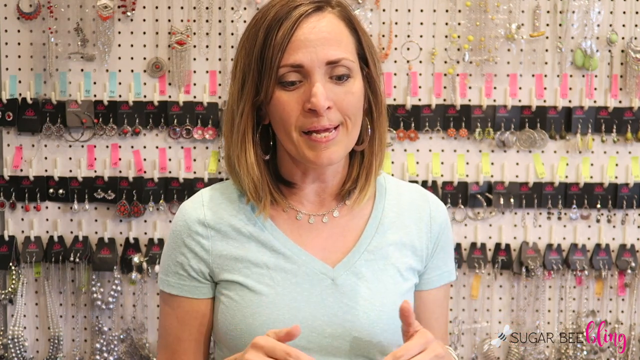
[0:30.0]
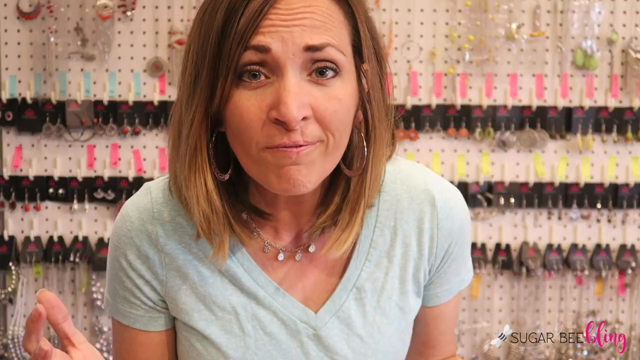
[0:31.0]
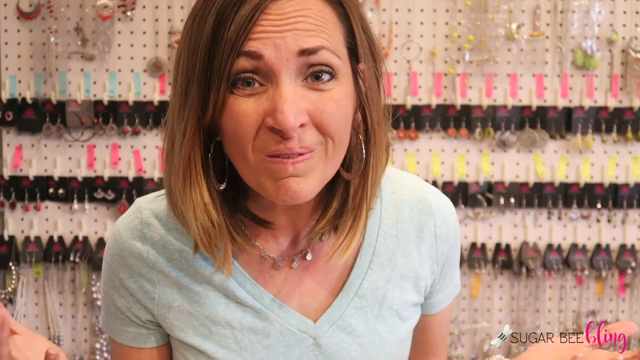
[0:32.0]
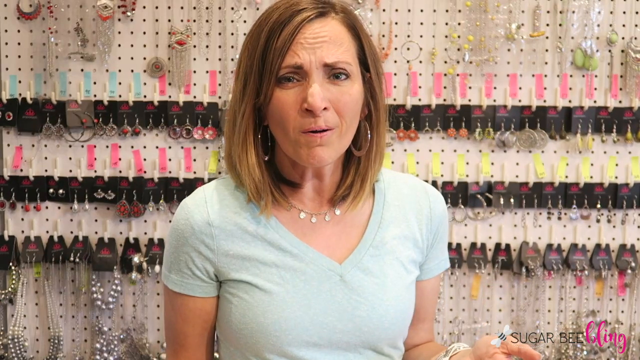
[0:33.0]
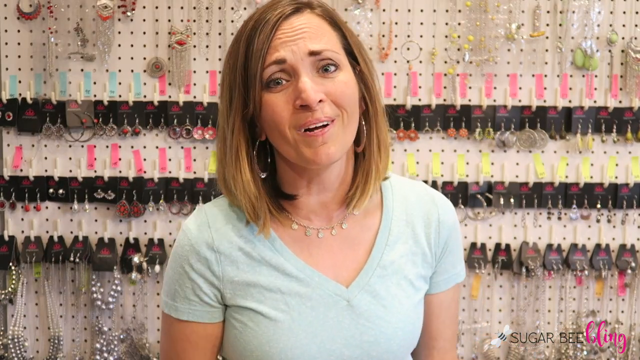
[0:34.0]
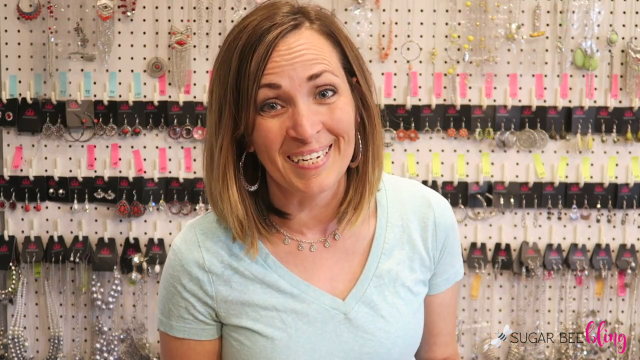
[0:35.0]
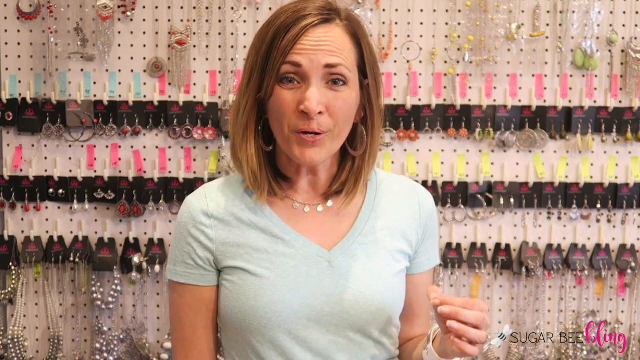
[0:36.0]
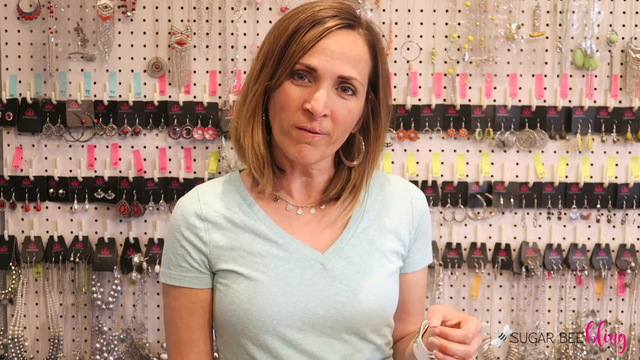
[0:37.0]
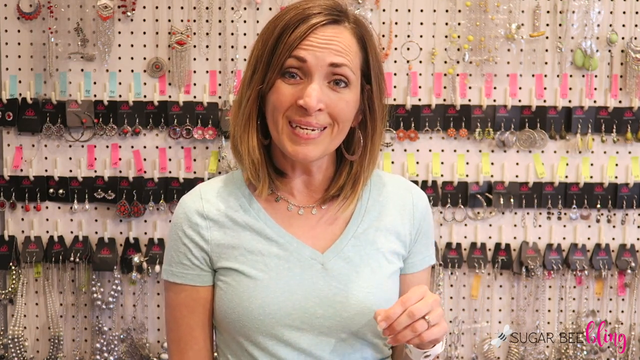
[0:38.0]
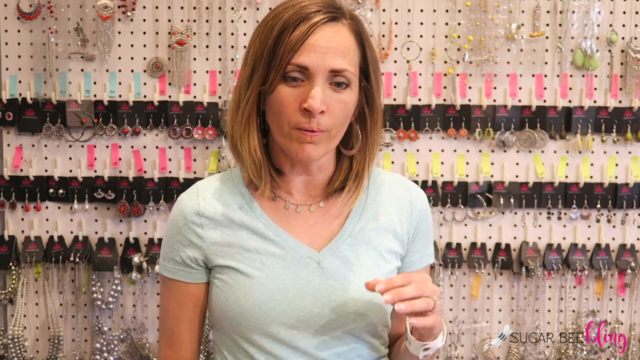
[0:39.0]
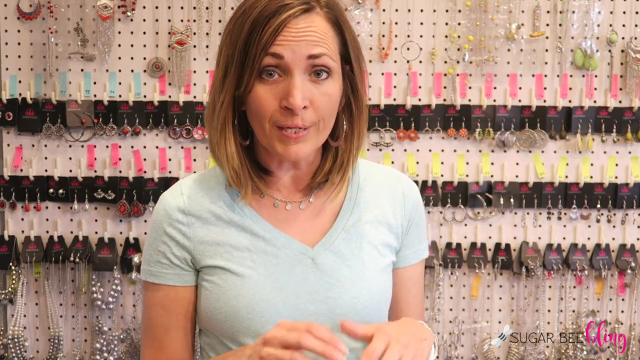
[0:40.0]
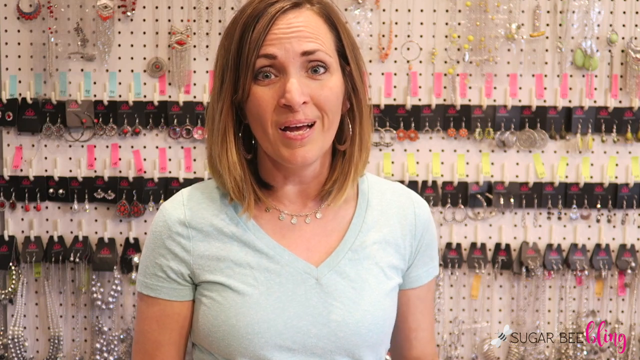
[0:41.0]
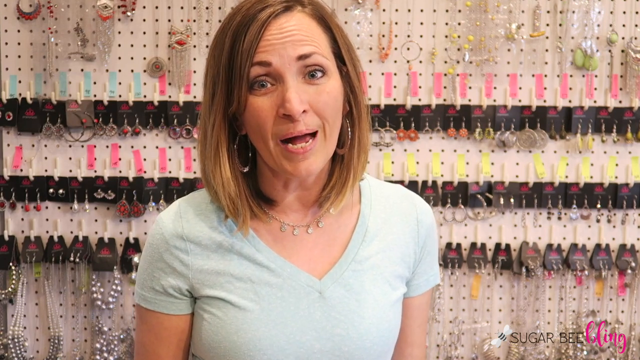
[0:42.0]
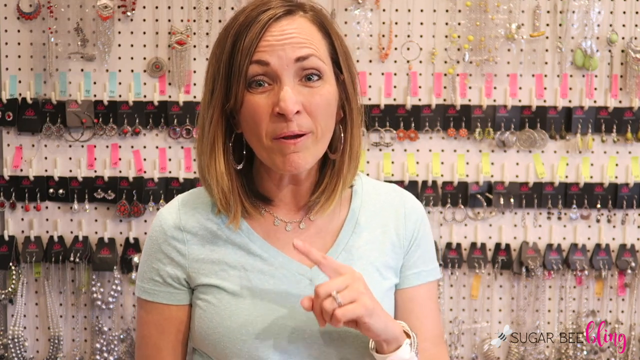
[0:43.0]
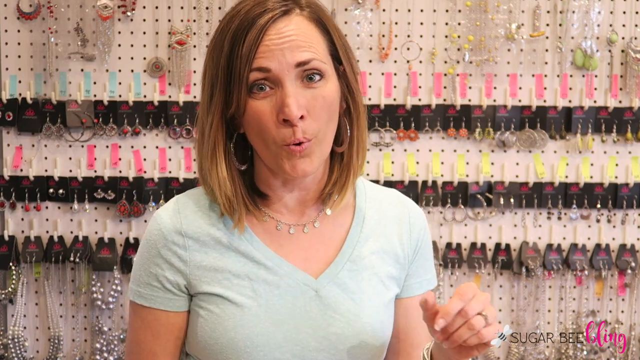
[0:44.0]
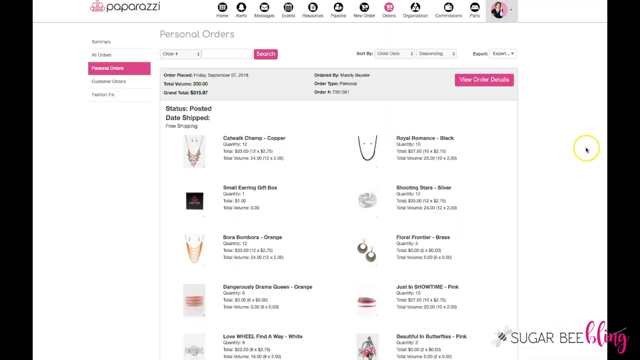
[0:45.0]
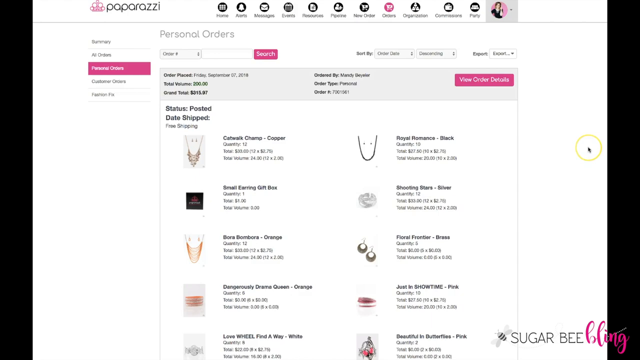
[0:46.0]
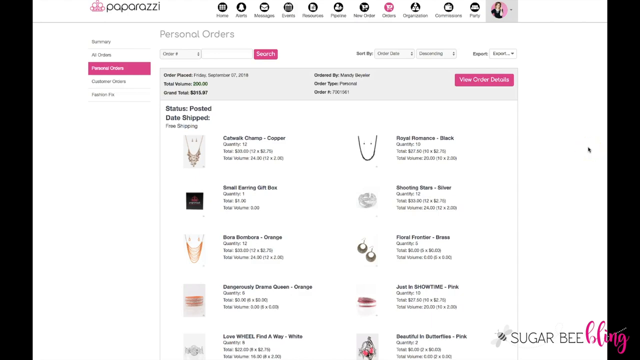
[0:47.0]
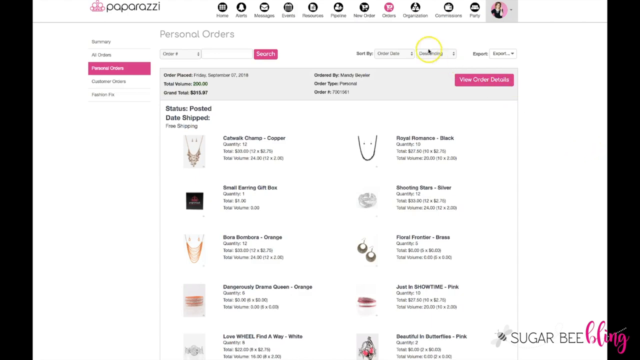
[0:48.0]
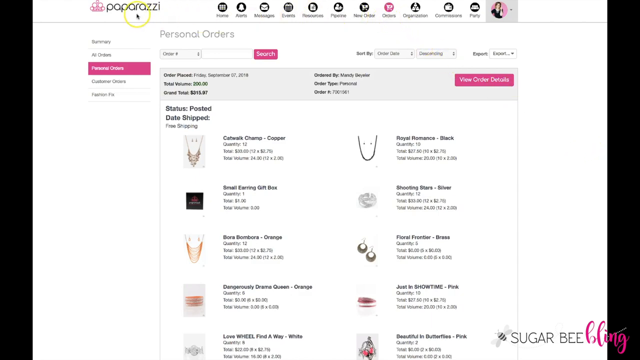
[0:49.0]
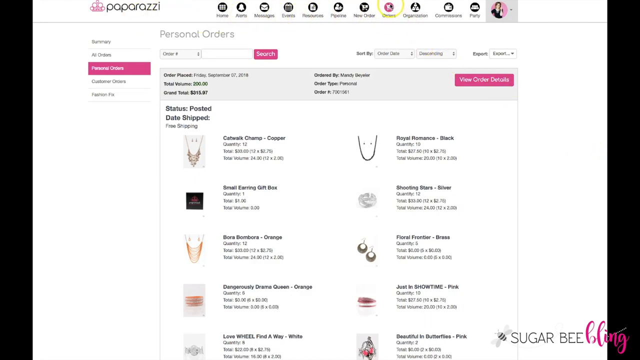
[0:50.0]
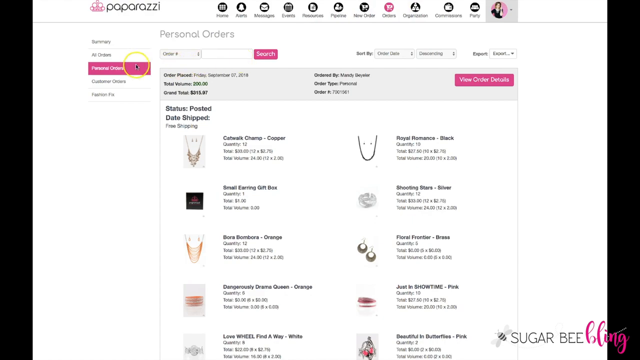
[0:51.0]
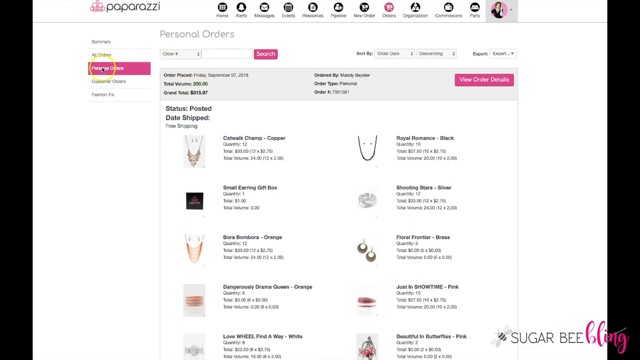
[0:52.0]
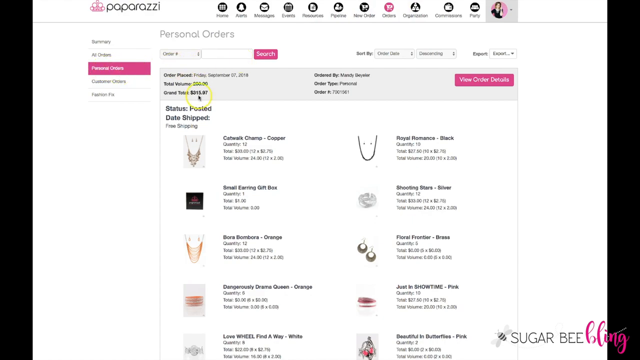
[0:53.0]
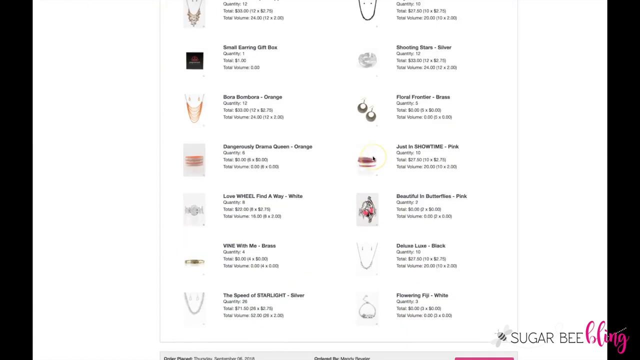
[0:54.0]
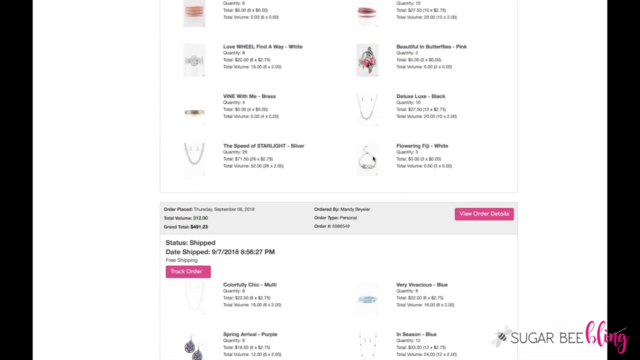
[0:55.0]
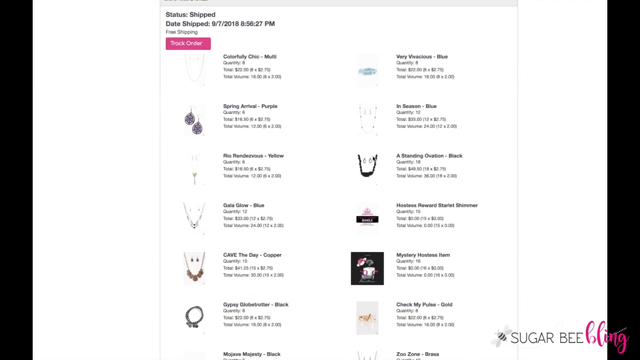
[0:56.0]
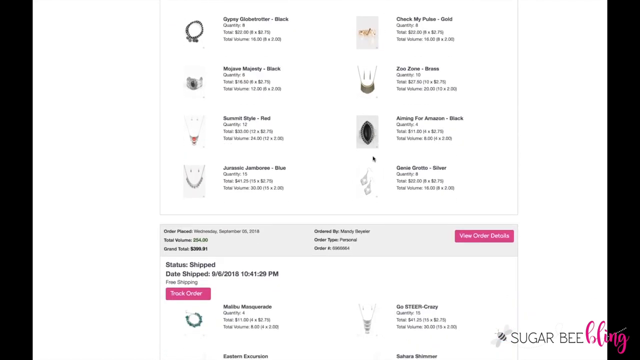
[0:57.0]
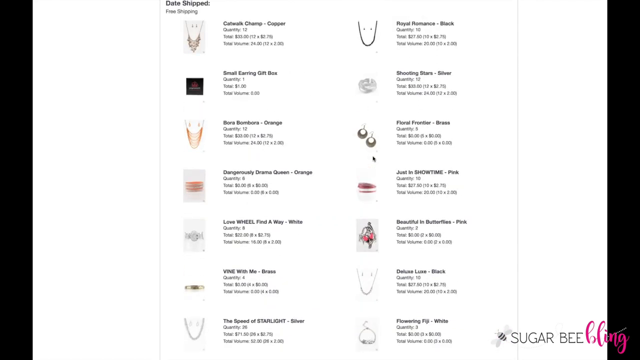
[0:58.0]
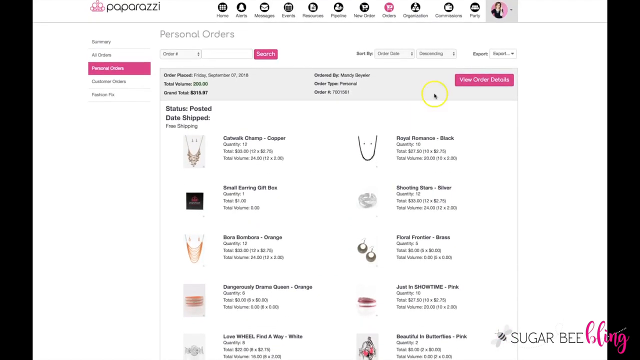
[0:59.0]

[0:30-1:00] The woman with short blonde hair, delicate makeup and blue eyes wears circle-shaped earrings, a necklace with diamonds and a blue T-shirt. She stands in front of the camera, and behind her many pieces of jewelry are on the wall, which has some colored strips on it. She keeps explaining with hand gestures about fashion and beauty. Next, a website called Paparazzi appears, showing its personal orders section with a client's orders of jewelry and outfit accessories. A mouse cursor points first to the orders option at the top of the website and then to personal orders. The page is scrolled down to show orders from an account whose owner is unclear.